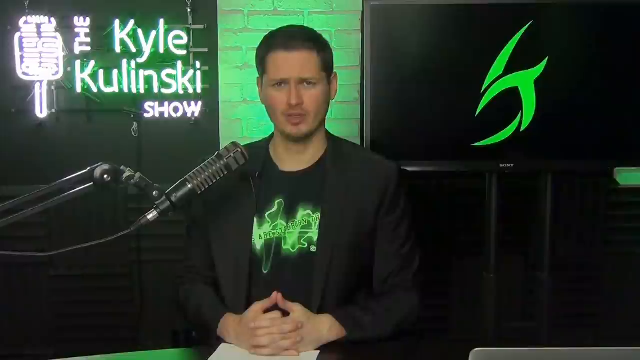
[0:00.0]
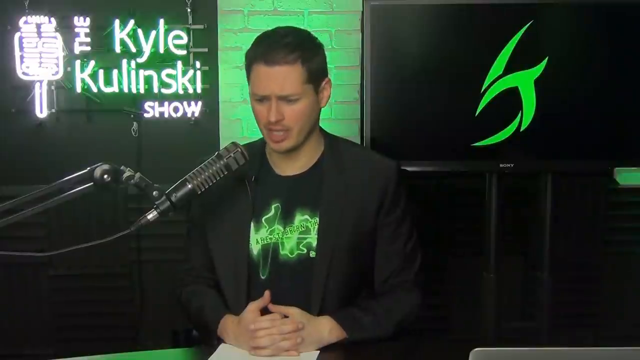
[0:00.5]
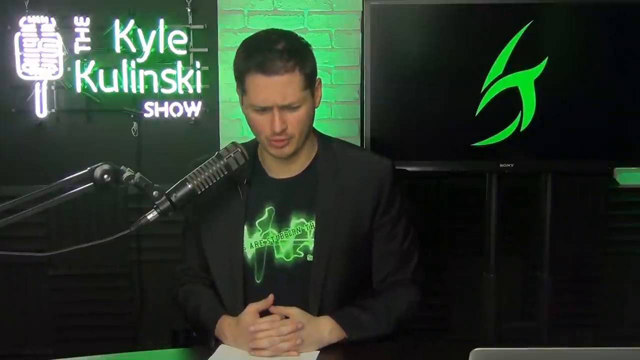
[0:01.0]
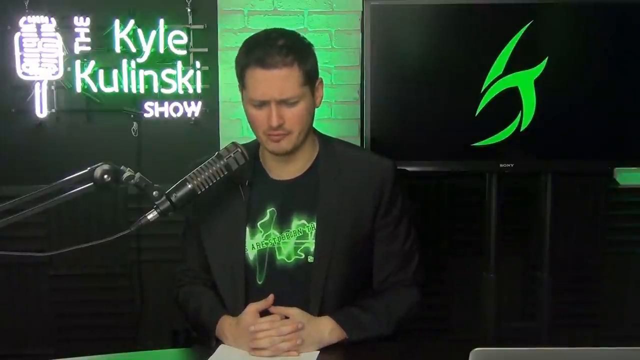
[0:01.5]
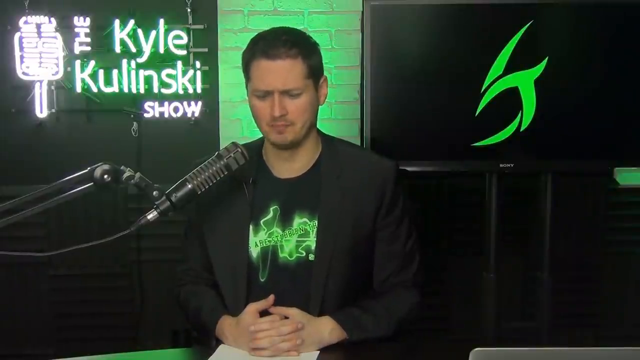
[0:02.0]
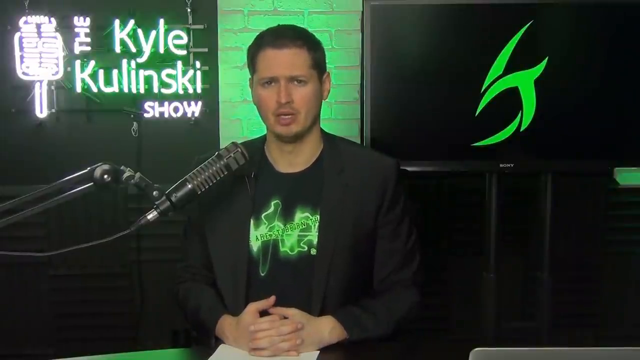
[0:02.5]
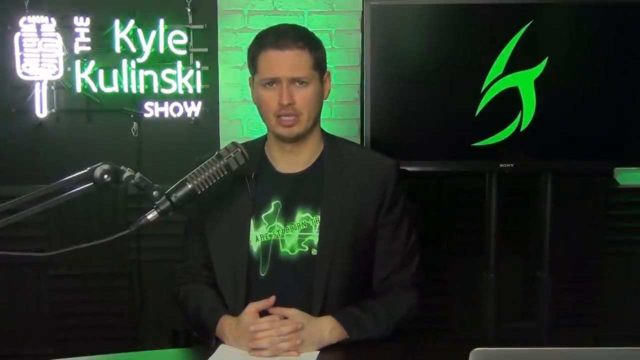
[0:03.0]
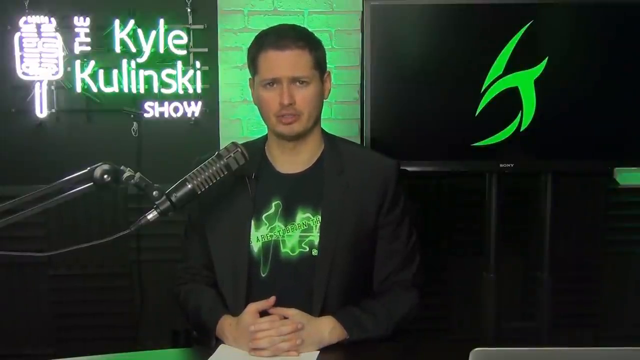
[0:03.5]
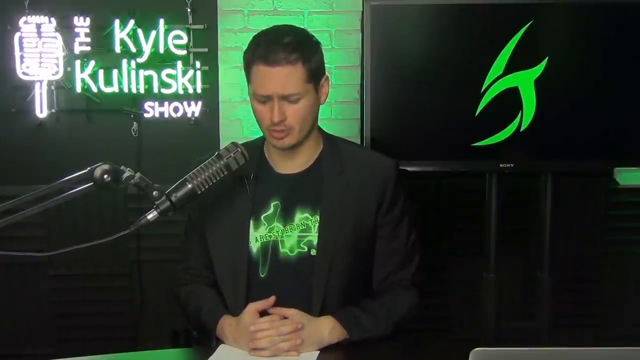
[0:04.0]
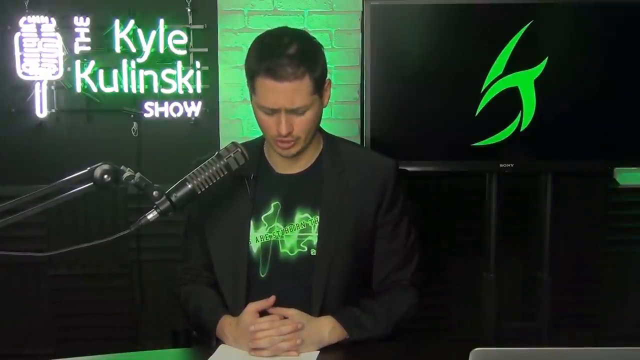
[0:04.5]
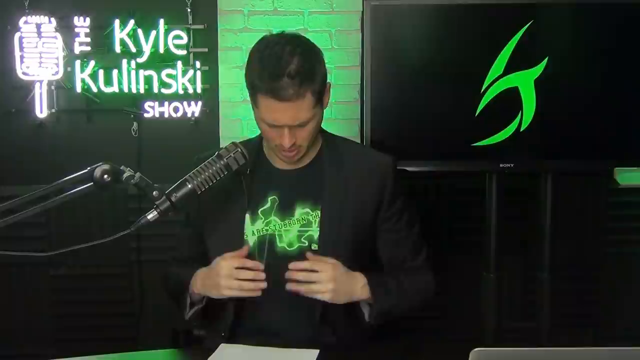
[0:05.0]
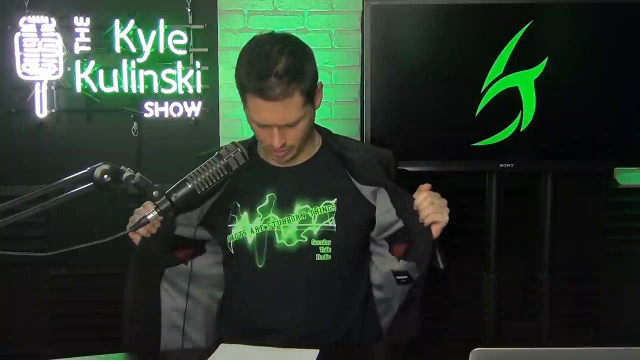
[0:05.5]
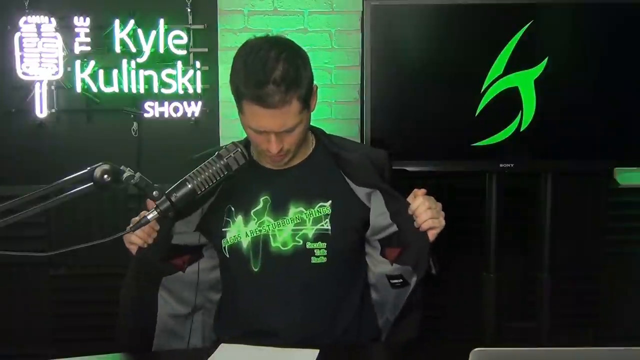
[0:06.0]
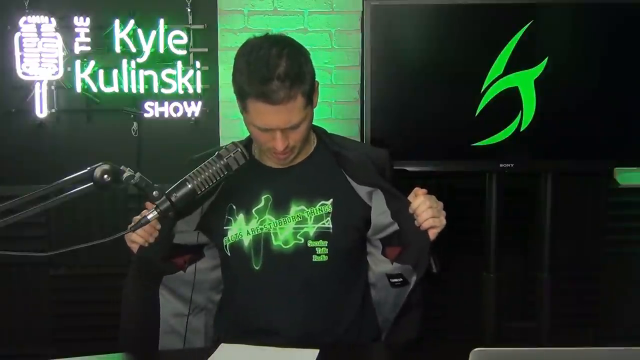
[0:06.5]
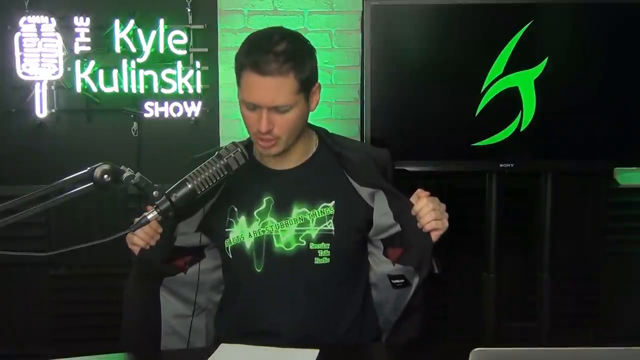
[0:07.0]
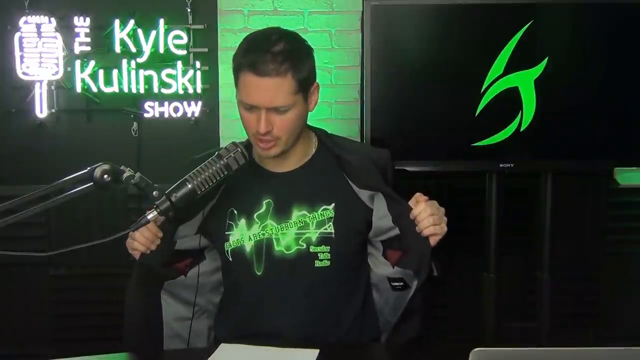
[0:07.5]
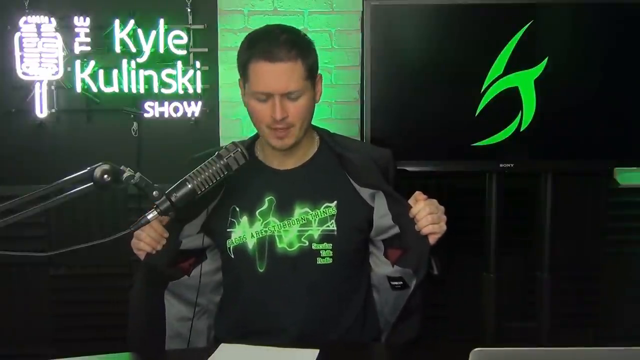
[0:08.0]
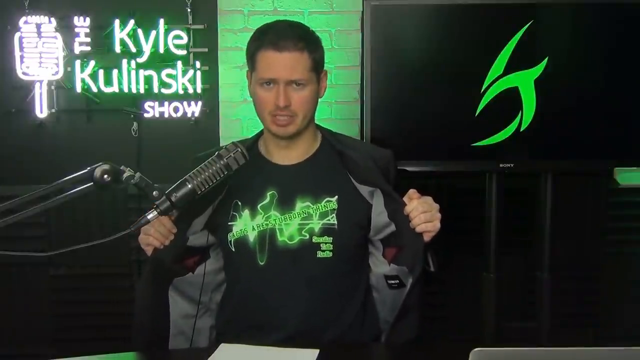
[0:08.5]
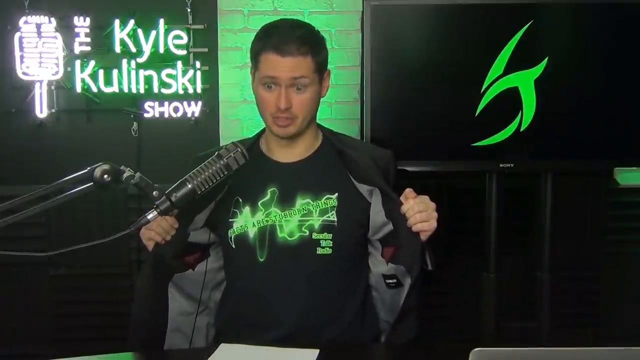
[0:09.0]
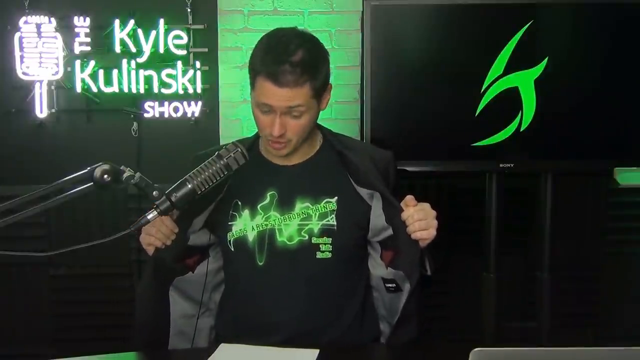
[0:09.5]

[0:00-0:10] The video opens on the Kyle Kulinski show, with the name "Kyle Kulinski" in neon green and a microphone in neon white to the left of it. Kyle himself is in the center with a microphone to his right. He has dark hair and dark eyes and is perhaps in his mid-30s. He wears a green coat over a dark green shirt with a design on it that looks to be glowing green. Behind him are green bricks, and there is a green symbol over his left shoulder. His hands are folded in front of him as he speaks into the microphone.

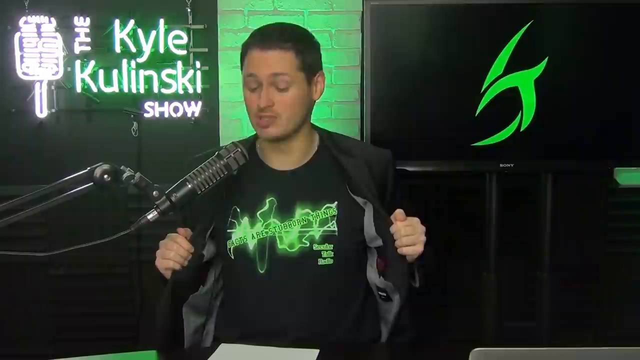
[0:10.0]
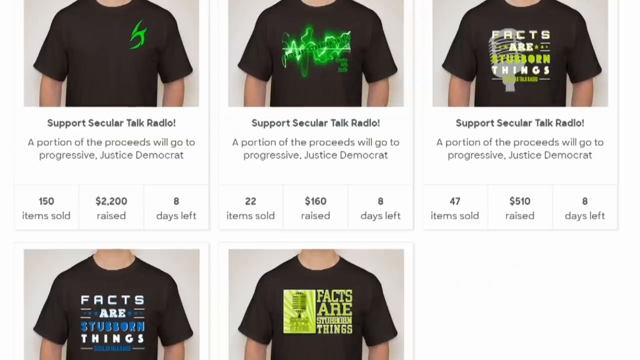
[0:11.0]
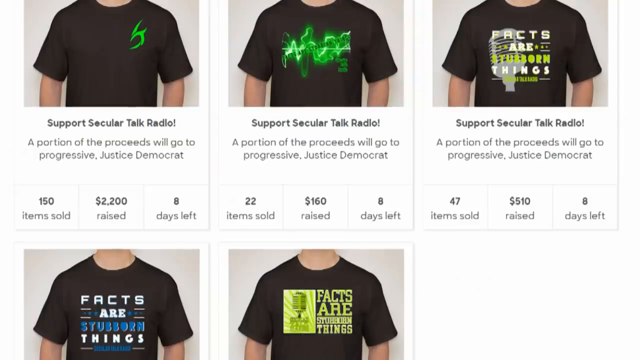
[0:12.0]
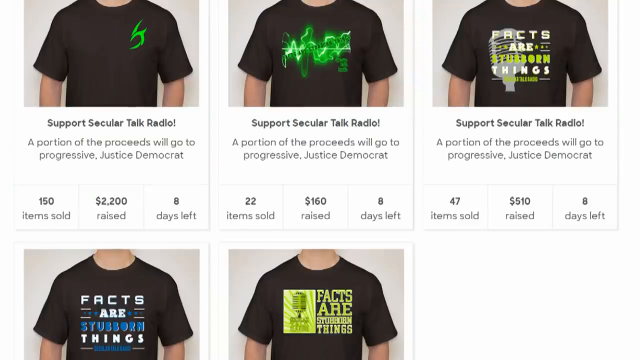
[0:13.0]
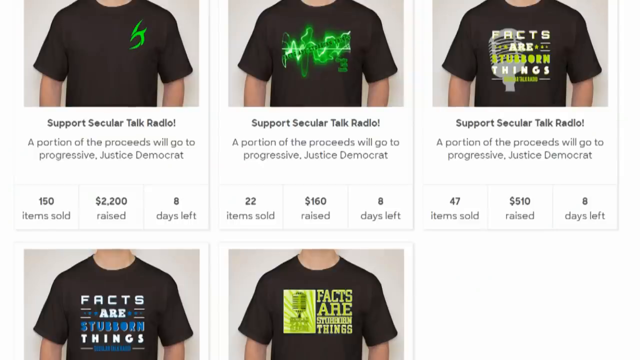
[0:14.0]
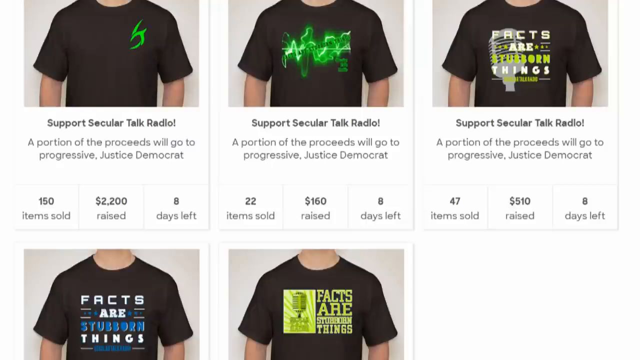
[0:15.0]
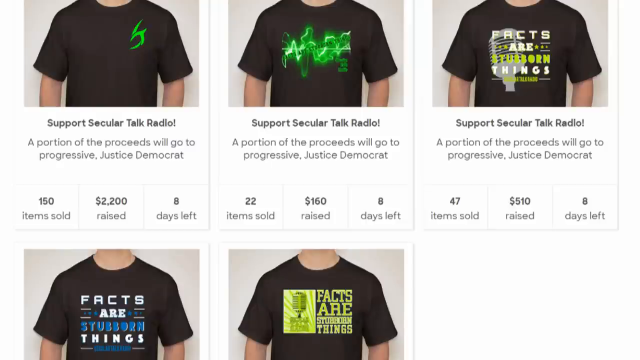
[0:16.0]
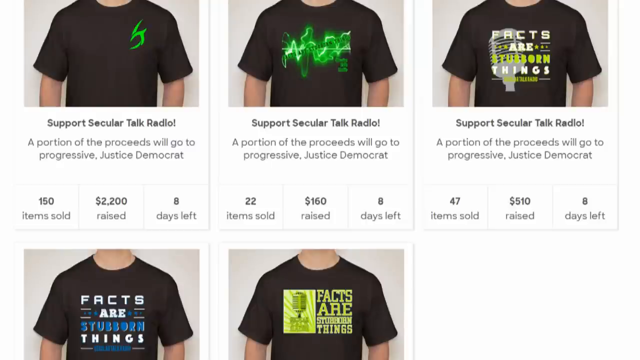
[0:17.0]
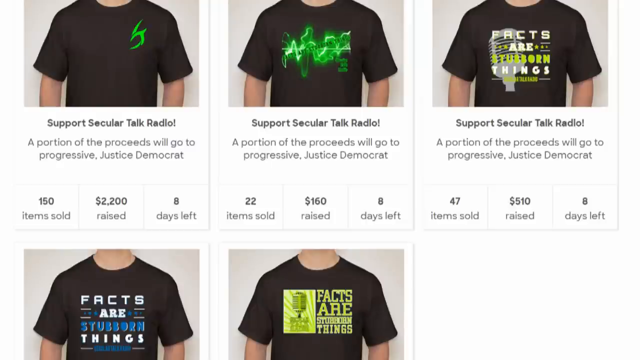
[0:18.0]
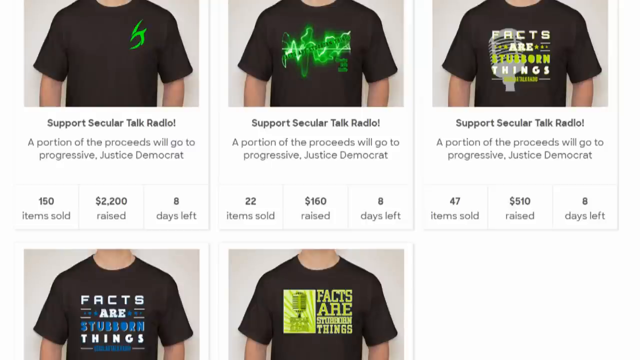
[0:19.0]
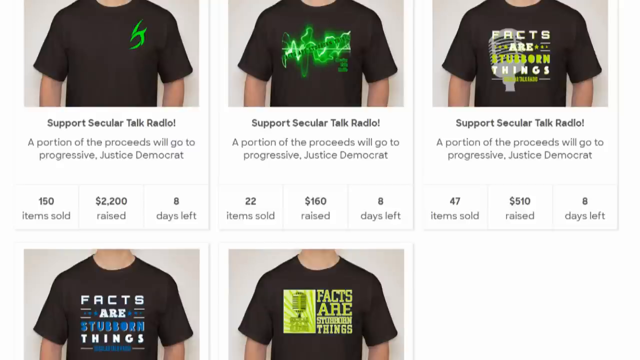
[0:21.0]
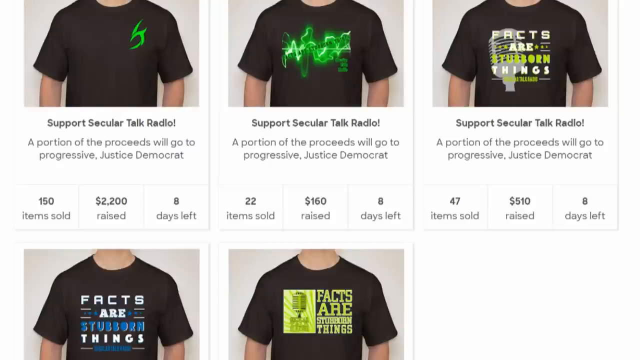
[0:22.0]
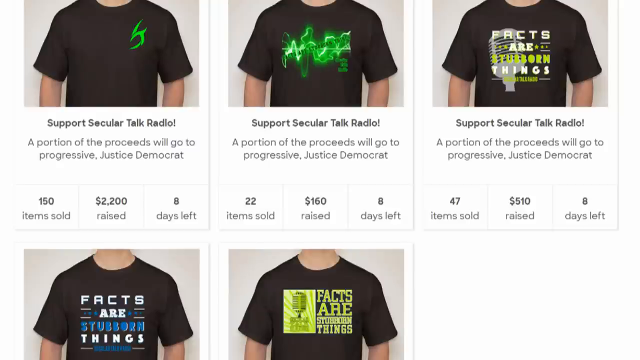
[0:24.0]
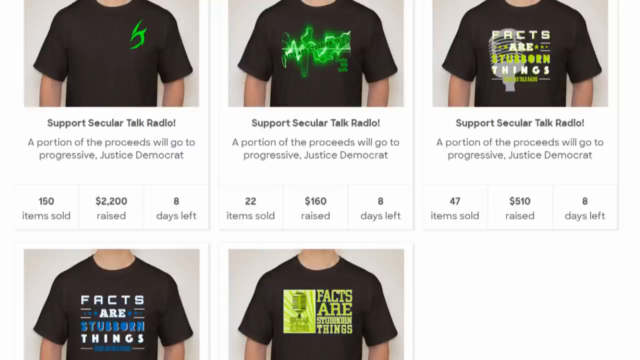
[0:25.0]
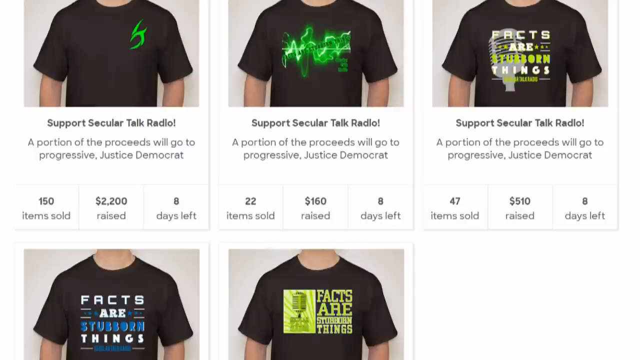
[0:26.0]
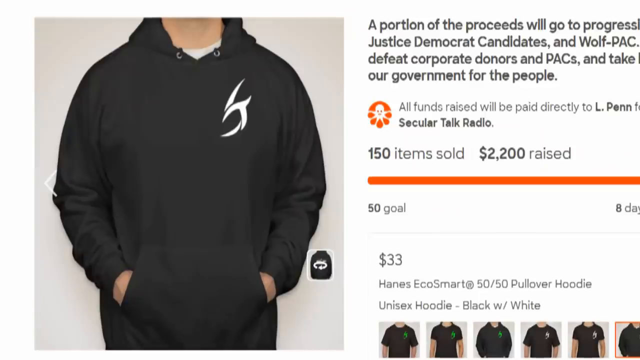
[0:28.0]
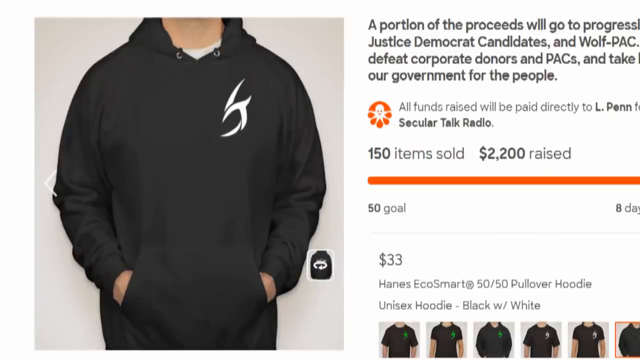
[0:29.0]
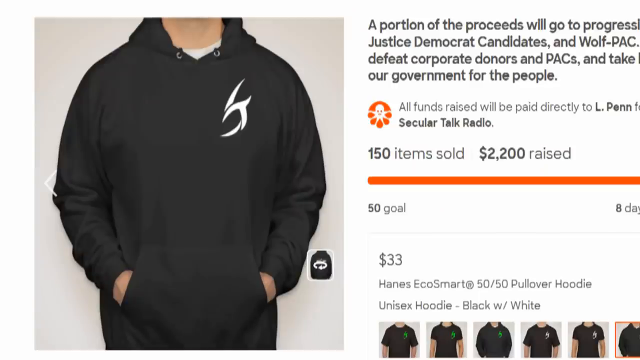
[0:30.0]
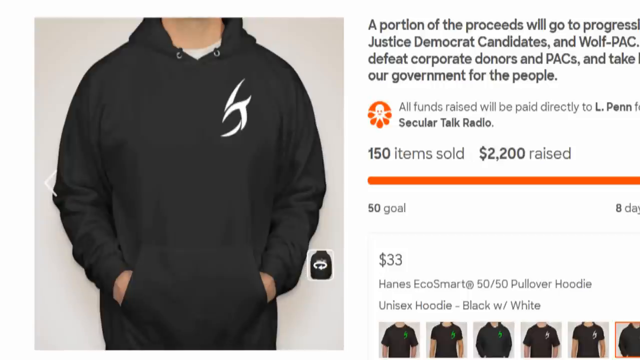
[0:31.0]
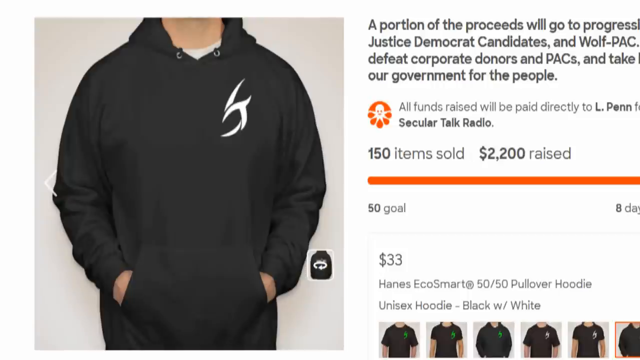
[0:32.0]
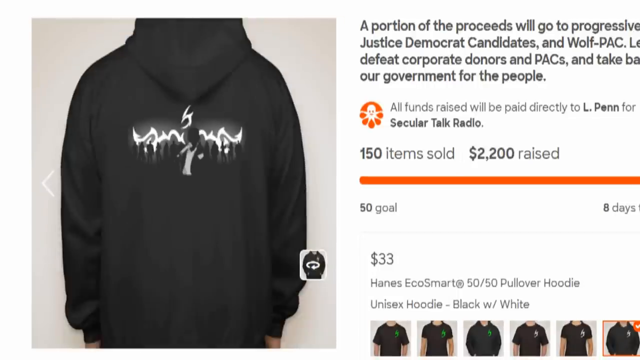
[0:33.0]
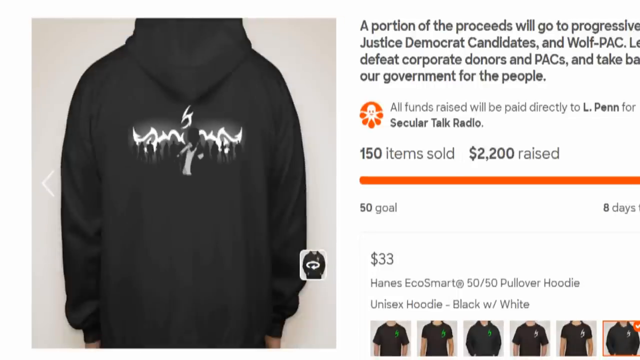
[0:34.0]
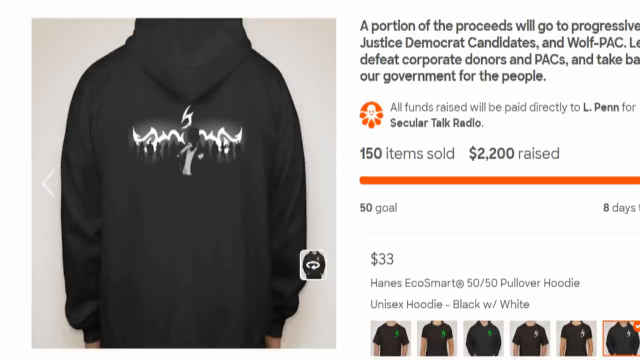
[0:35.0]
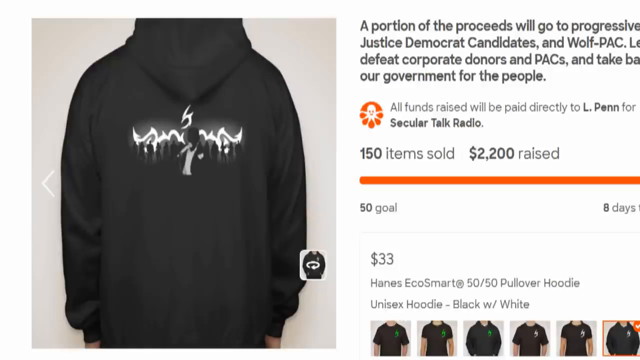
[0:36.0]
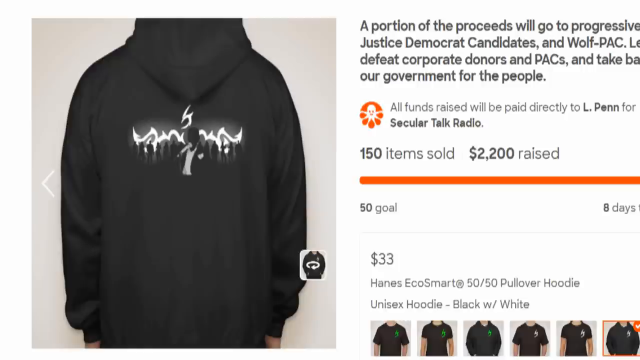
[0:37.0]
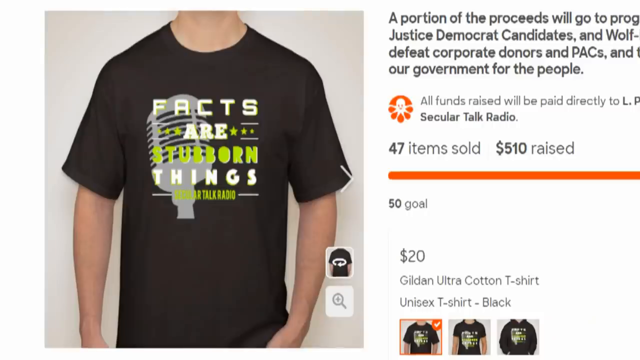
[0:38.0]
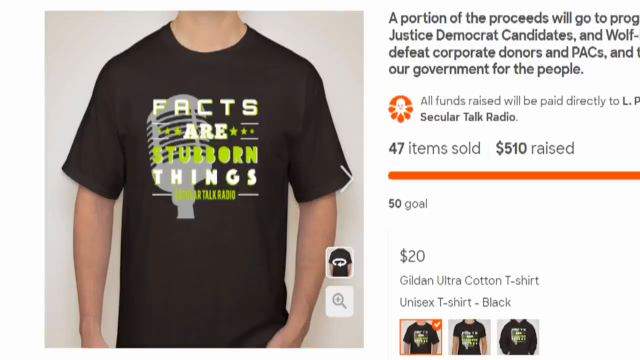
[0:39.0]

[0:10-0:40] The show is the Kyle Kulinski show. "Kyle Kulinski" appears in green neon in the upper left, with a white vertical "V" and "show" written horizontally in white; to the left of it is a neon microphone. Kyle Kulinski is mid-30s, with dark hair and dark eyes. He wears a dark jacket that may be green and a dark green shirt with an emblem on it that says "facts are stubborn things". The bricks behind him are green from the light hitting them, and on the right there is a green symbol that looks like fire. He has a microphone to his right and opens up his coat to show his t-shirt.